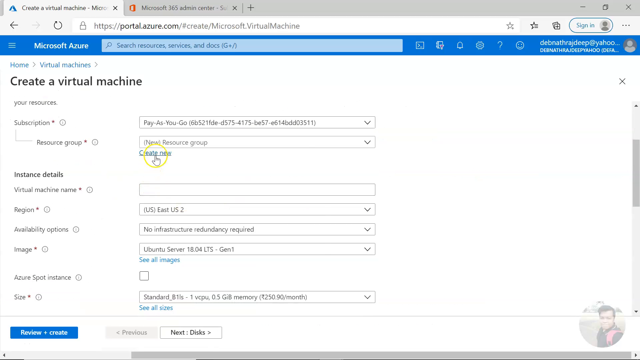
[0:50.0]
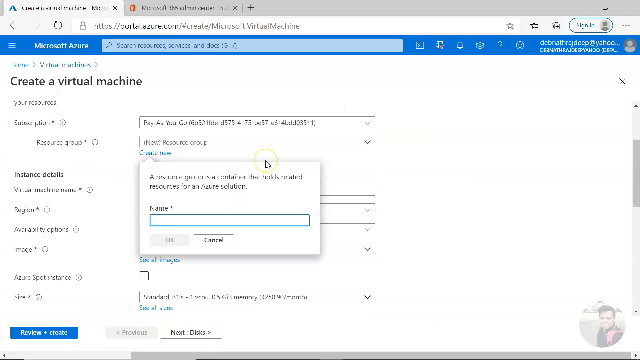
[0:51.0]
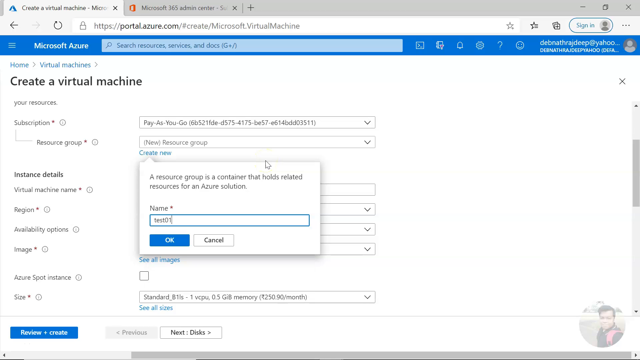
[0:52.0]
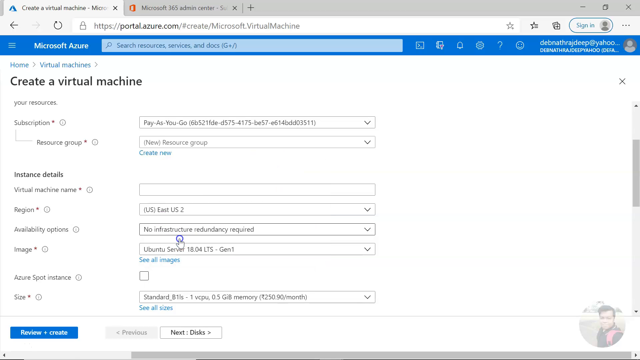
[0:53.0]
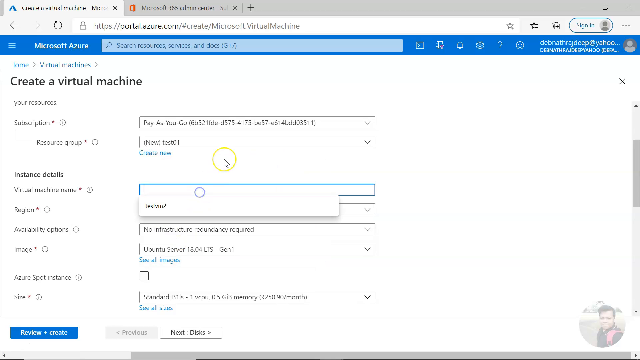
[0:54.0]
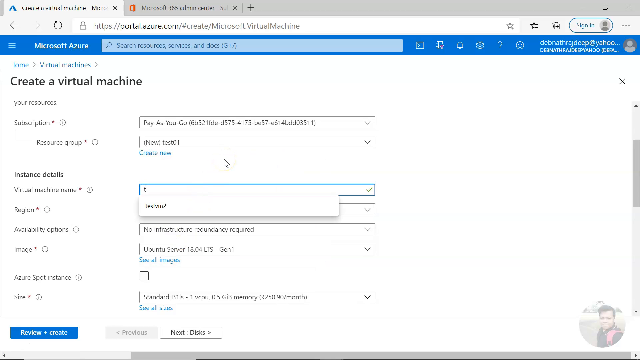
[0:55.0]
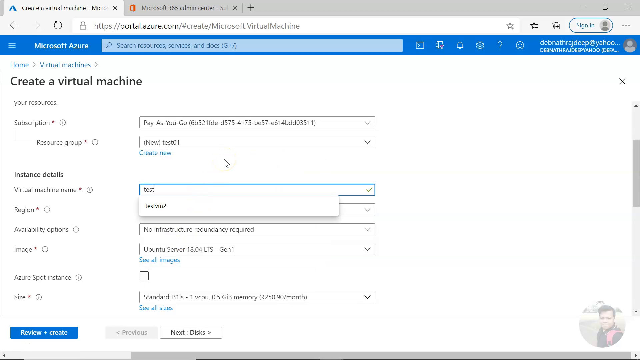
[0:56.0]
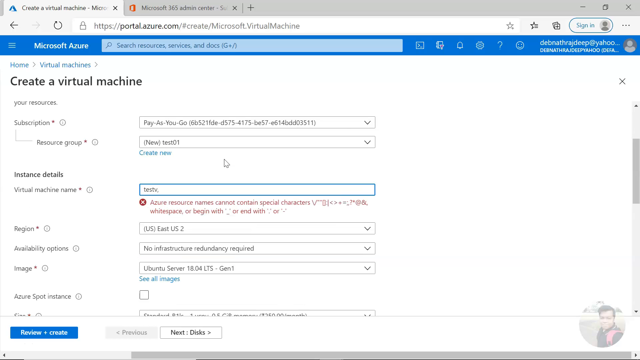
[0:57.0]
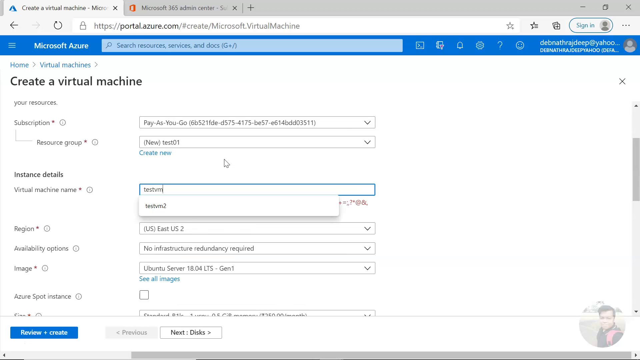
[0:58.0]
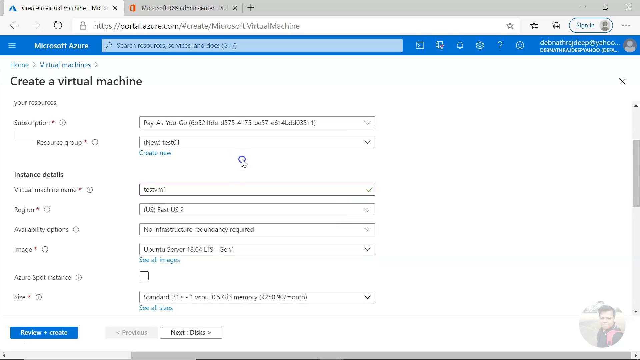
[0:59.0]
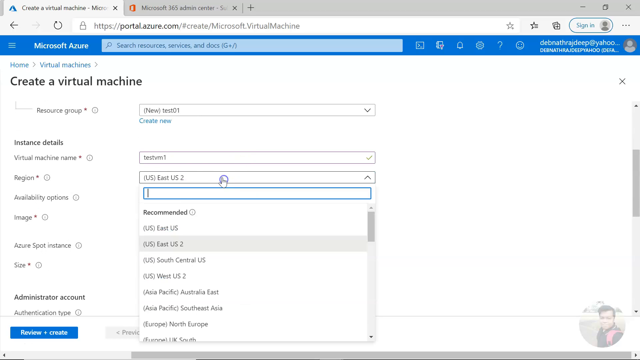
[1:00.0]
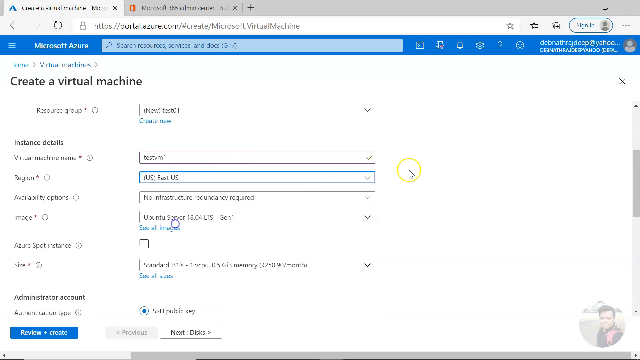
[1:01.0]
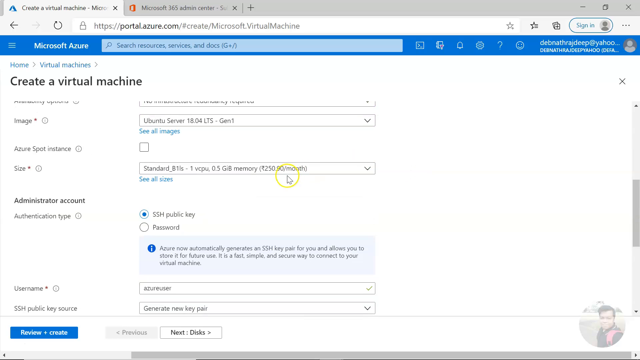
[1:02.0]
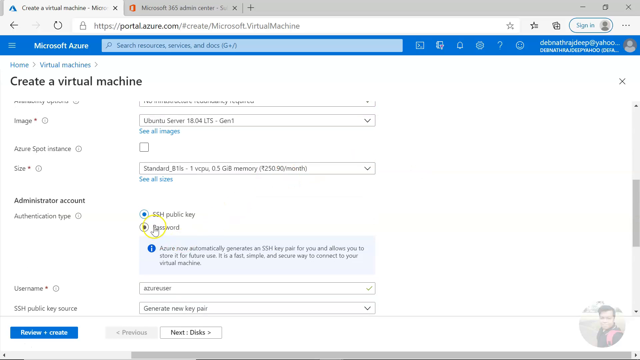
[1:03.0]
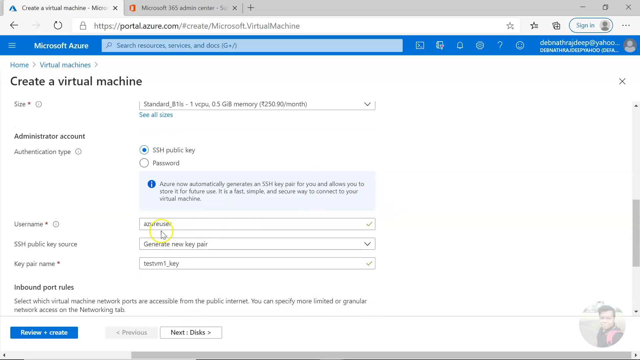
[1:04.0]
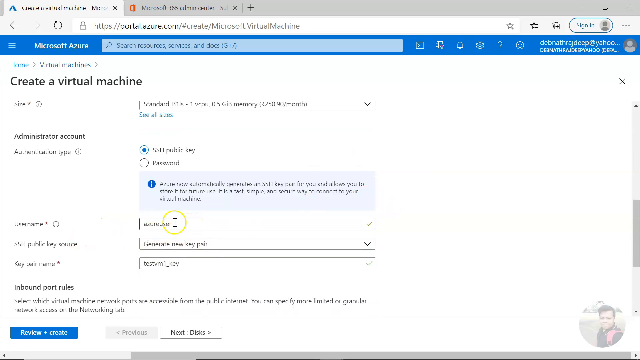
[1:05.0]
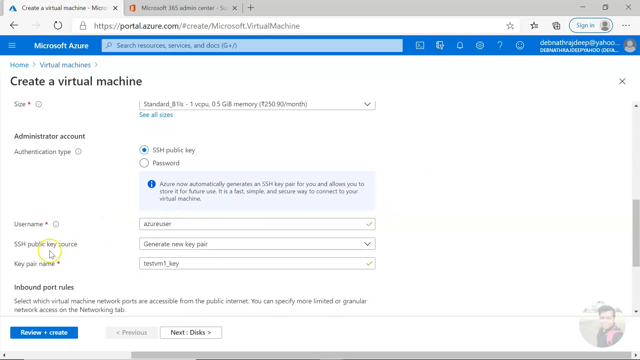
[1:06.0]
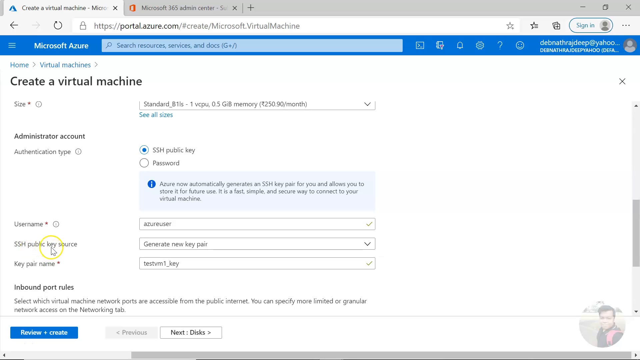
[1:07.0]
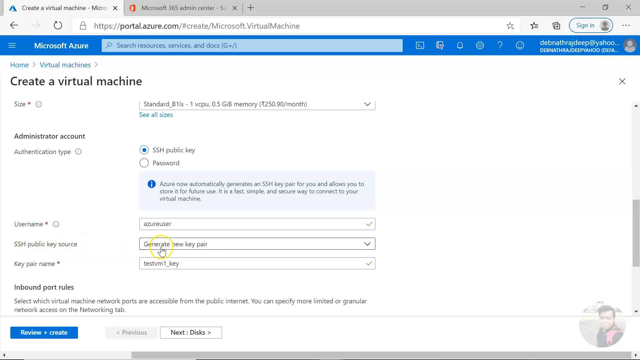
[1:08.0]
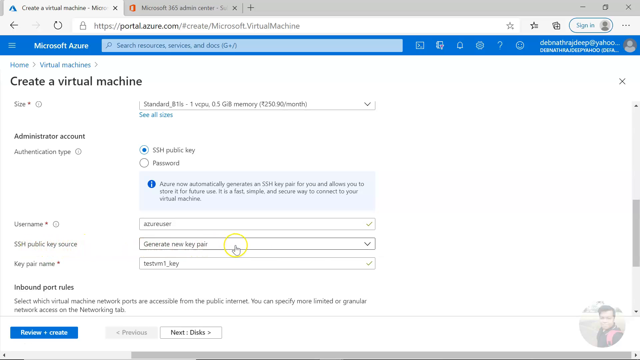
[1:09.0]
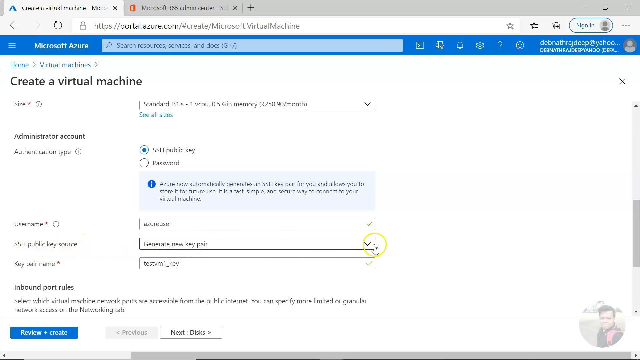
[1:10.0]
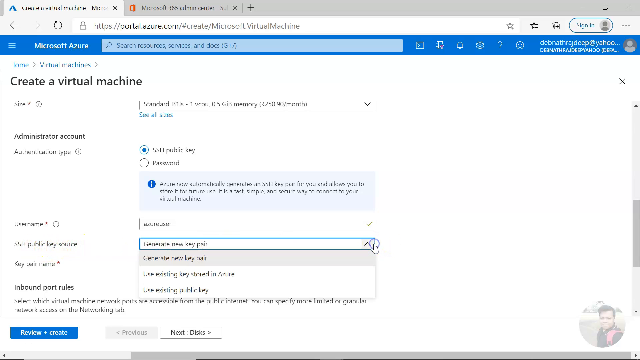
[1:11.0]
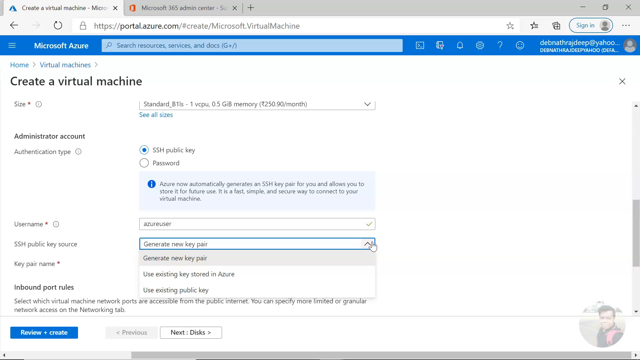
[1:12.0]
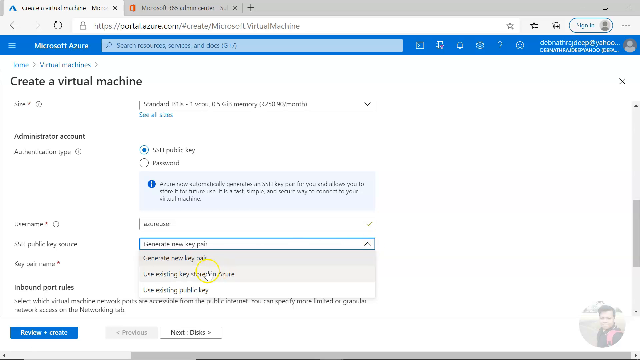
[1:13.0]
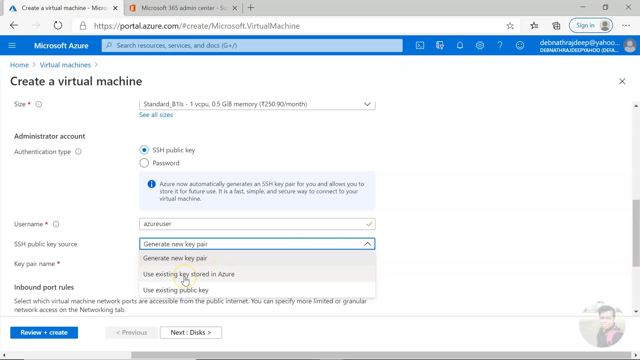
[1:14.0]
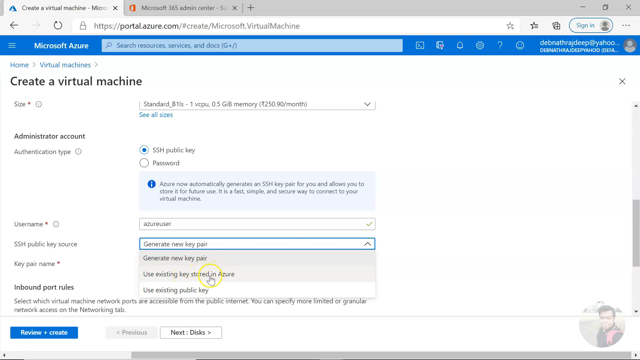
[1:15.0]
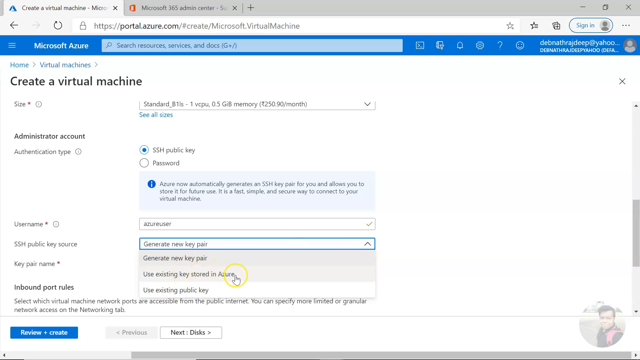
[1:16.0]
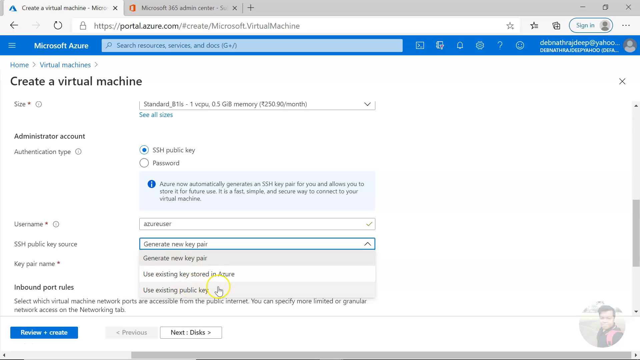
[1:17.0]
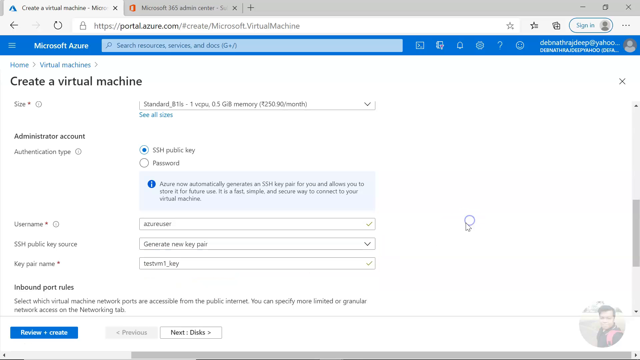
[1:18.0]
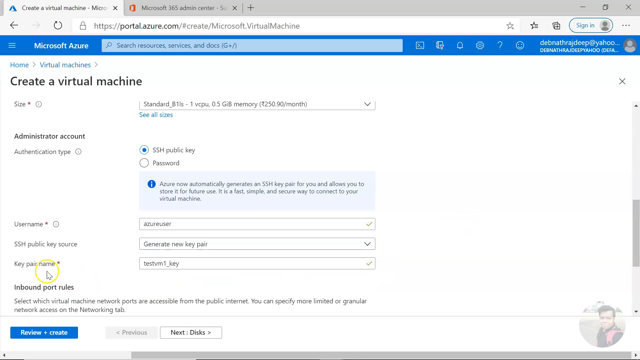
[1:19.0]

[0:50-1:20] On the "Create a virtual machine" page of the portal.azure.com website, several labels with drop-down menus are visible, and the cursor clicks the "create new" link under the new resource group drop-down menu. A small white box pops up reading "A resource group is a container that holds related resources for an Azure solution." It has a text input box labeled "name", where the user types "test01" and then presses the "Okay" button. Under the instance details, the cursor clicks the text input box next to virtual machine name and the user types "testv.". A small error message in red appears underneath, with a circle containing a white x, reading "Azure resource names cannot contain special characters", followed by several characters such as a question mark, an equals sign and a greater-than sign, and continuing "white space or begin with an underscore or end with a period or dash". The user clicks the text input box again, erases the period and types vm1, so it reads "testvm1". They move down to the drop-down menu next to region and click "(US) East US". They scroll down the page a little, hover over the drop-down menu next to size, and then hover over the password radio checkbox next to authentication type without selecting it. The mouse hovers over the username and SSH public key source drop-down menus. The user then clicks the drop-down menu next to SSH public key source, which shows three items: "Generate new key pair", "Use existing key stored in Azure" and "Use existing public key". Without choosing any option, they click a blank white space on the right side to close the menu.